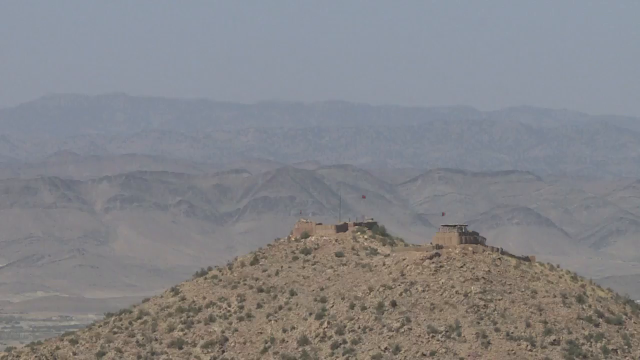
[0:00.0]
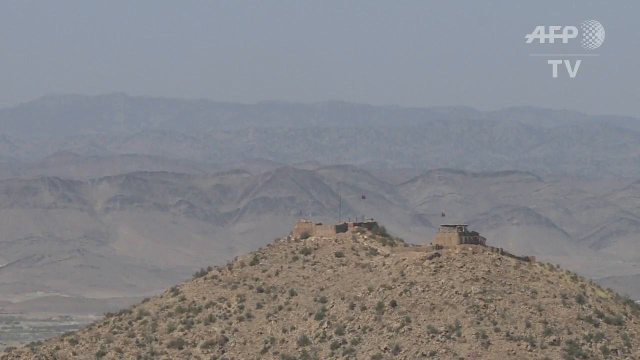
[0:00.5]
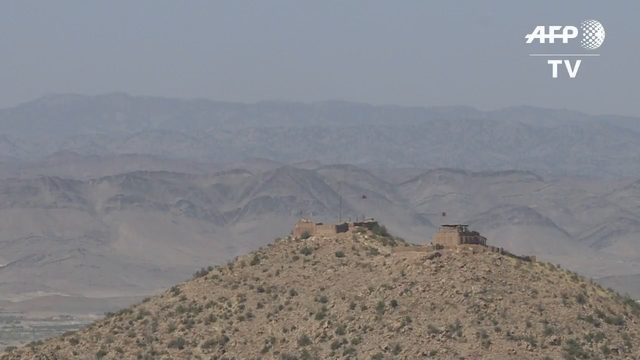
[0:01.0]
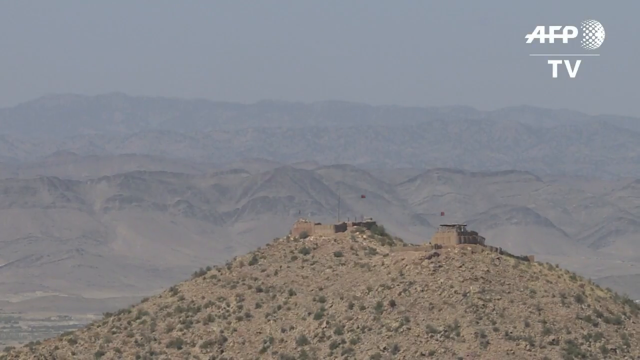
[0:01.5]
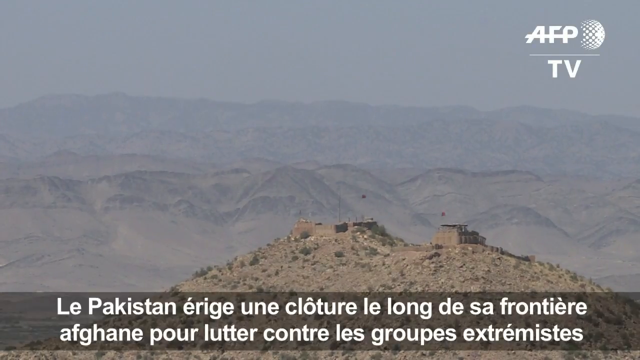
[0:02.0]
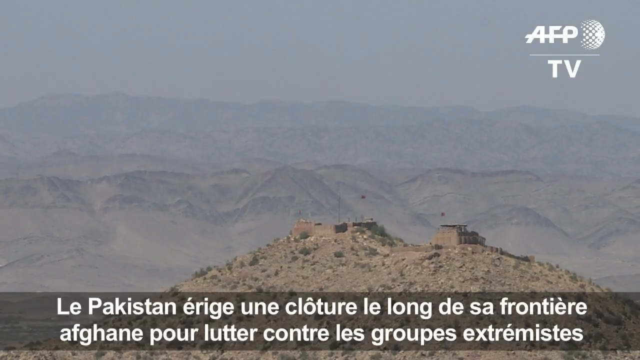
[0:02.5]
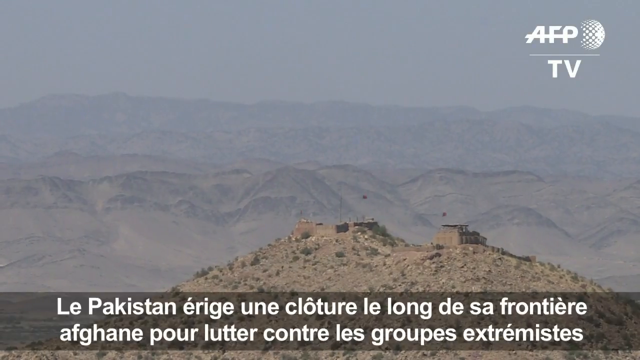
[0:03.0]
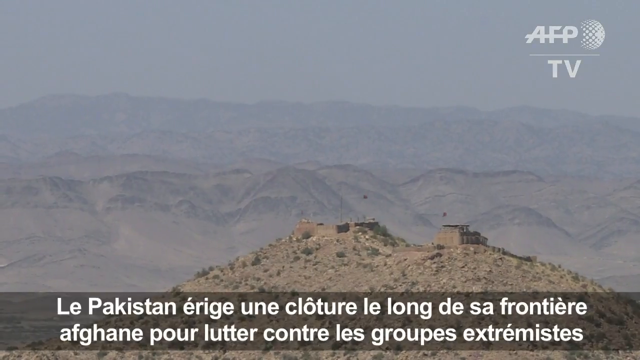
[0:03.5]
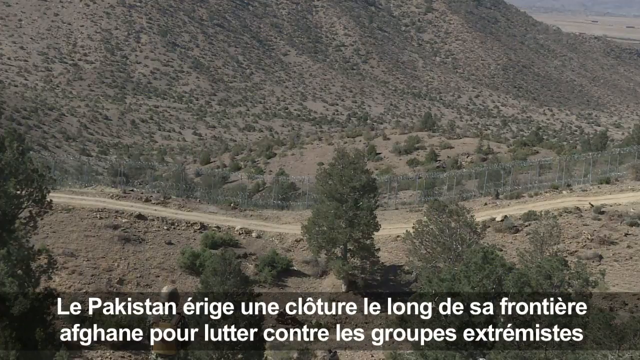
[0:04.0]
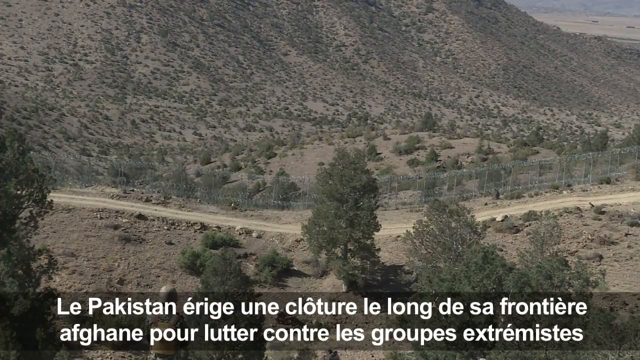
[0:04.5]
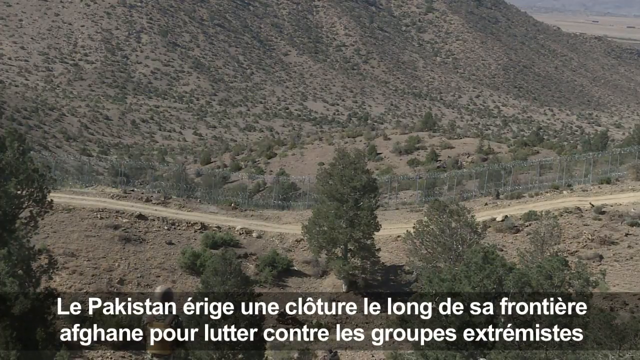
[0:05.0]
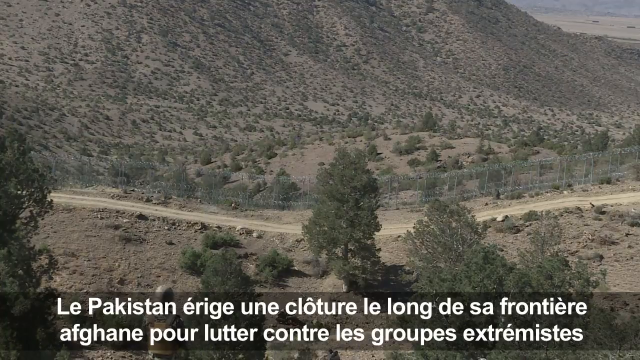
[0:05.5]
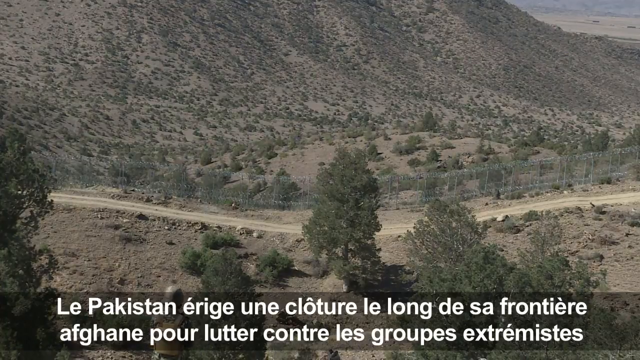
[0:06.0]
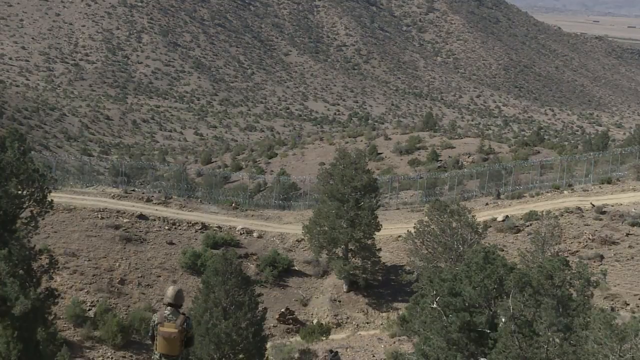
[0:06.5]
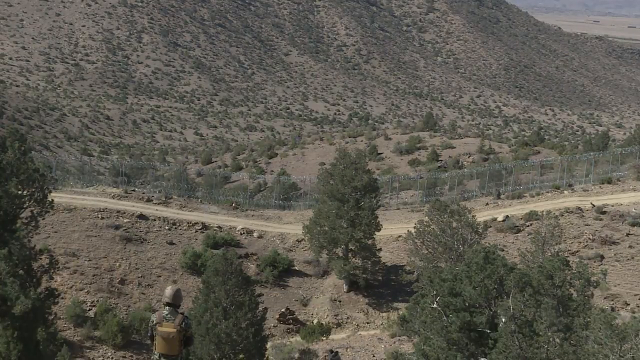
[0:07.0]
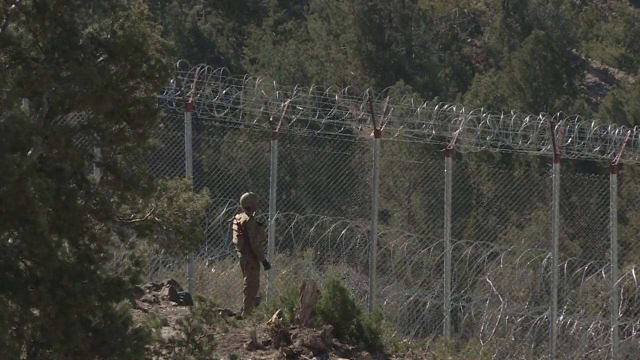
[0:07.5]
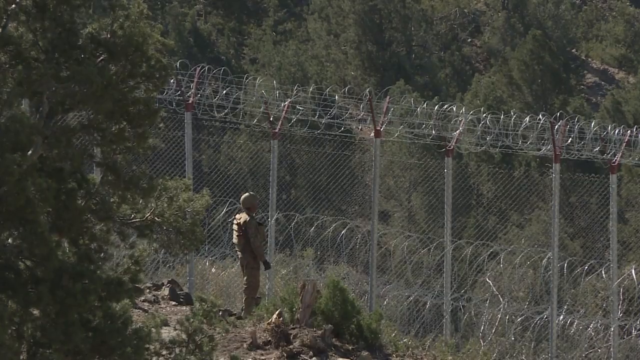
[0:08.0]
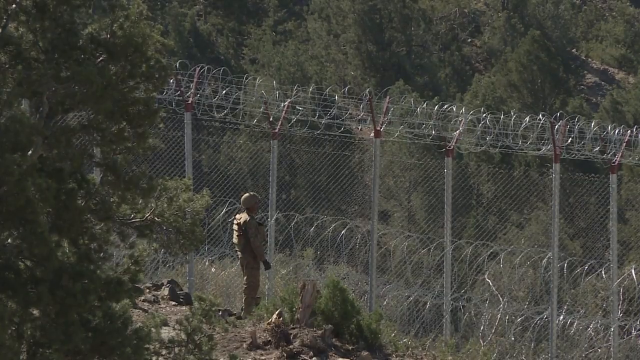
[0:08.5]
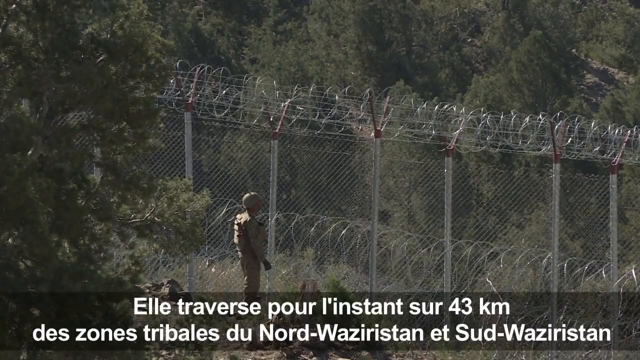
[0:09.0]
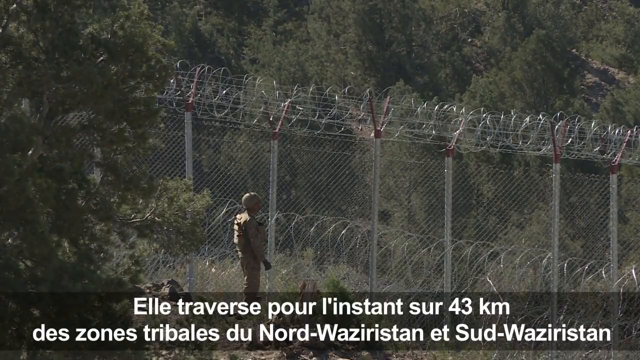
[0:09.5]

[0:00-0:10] The scene appears to be in Pakistan. The vegetation does not look healthy, and there are not many trees. There are mountains with a few trees on them. A person who appears to be a soldier is standing next to a big fence, and soldiers are guarding the area, apparently to keep people from coming to this side. A big mountain is visible; there is not much sun, and it is a little misty. A dusty road goes up the mountain.